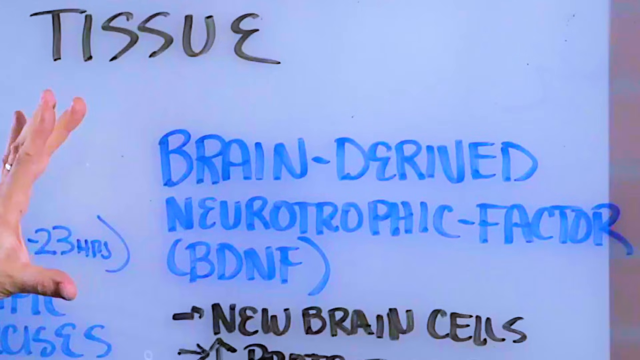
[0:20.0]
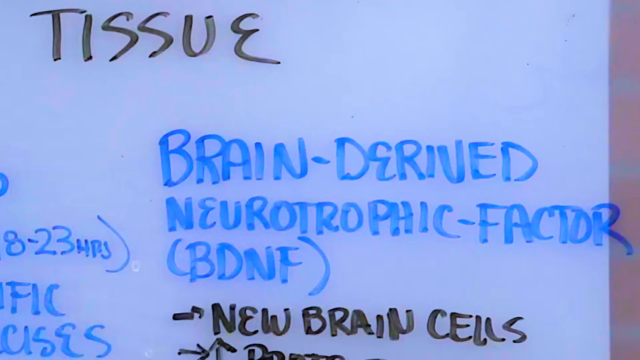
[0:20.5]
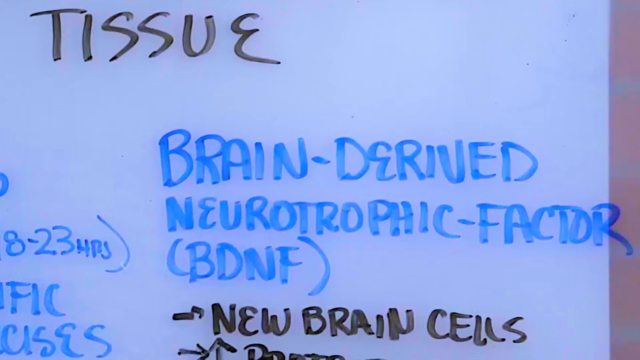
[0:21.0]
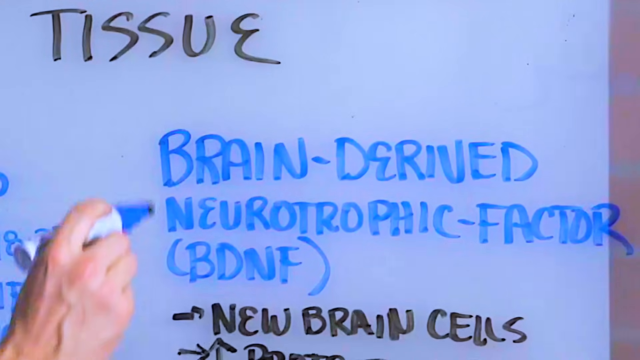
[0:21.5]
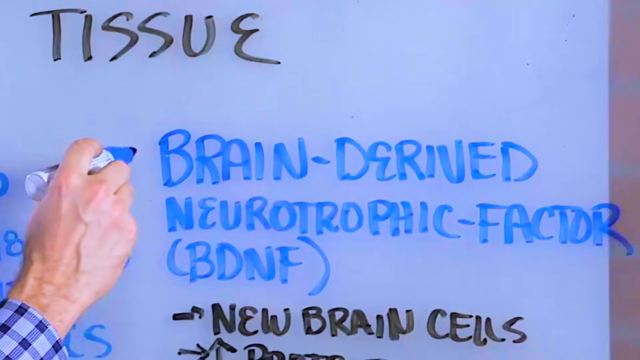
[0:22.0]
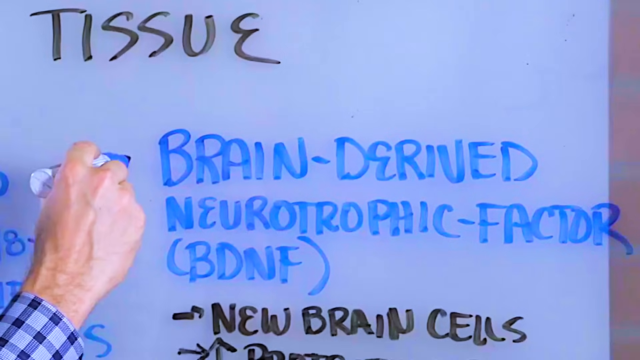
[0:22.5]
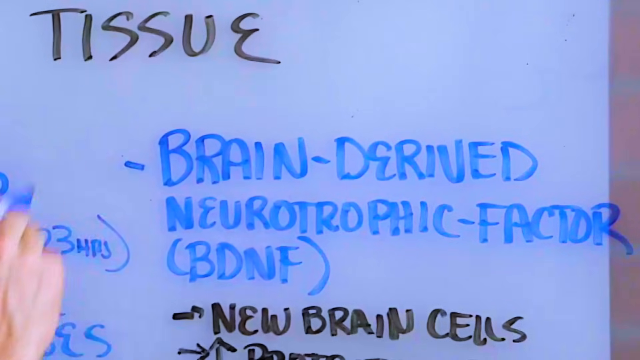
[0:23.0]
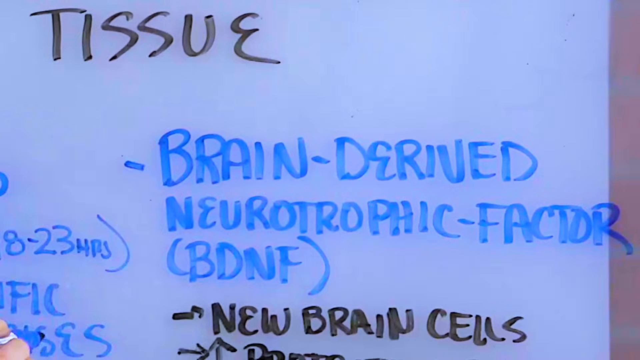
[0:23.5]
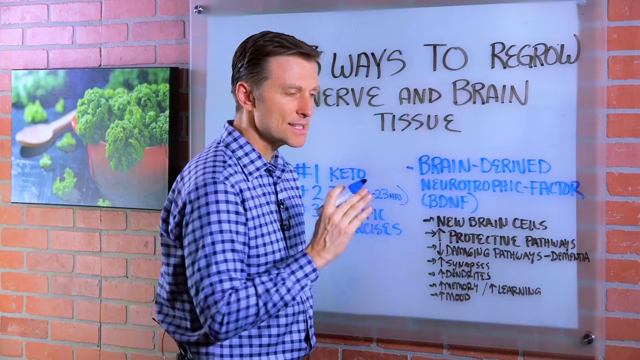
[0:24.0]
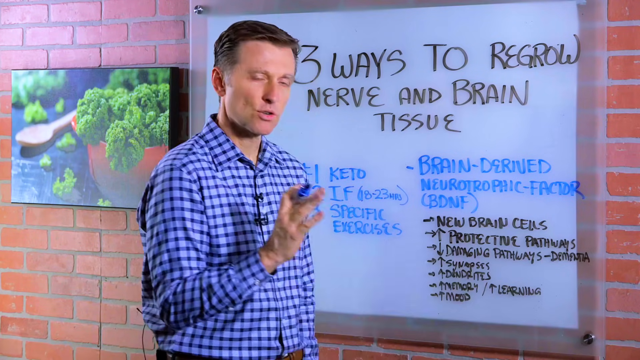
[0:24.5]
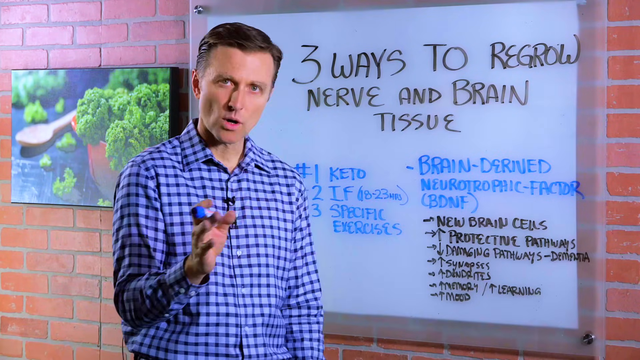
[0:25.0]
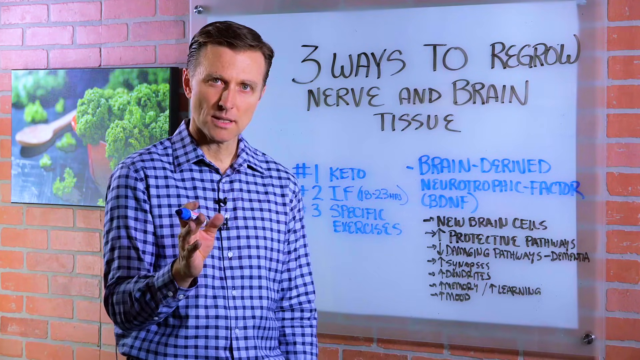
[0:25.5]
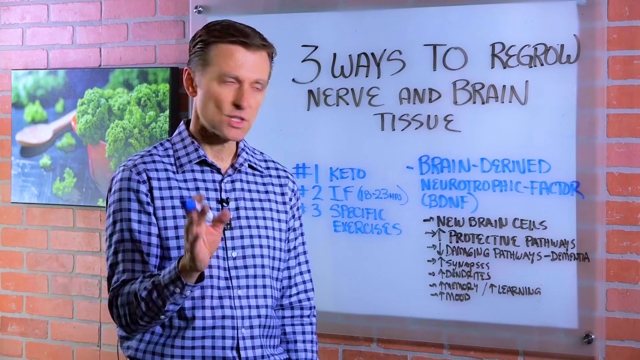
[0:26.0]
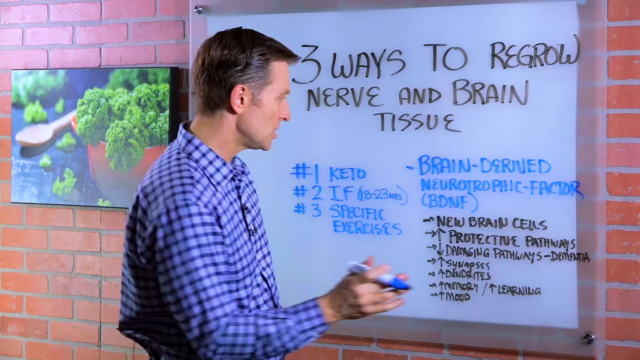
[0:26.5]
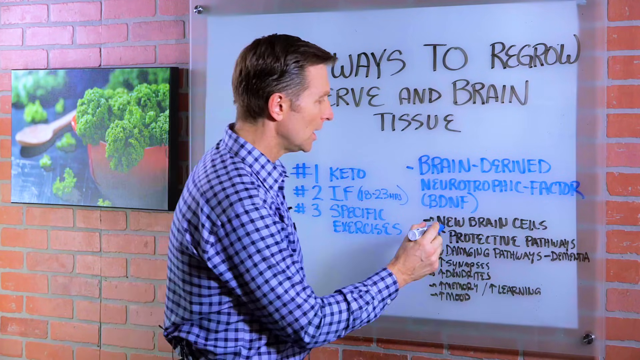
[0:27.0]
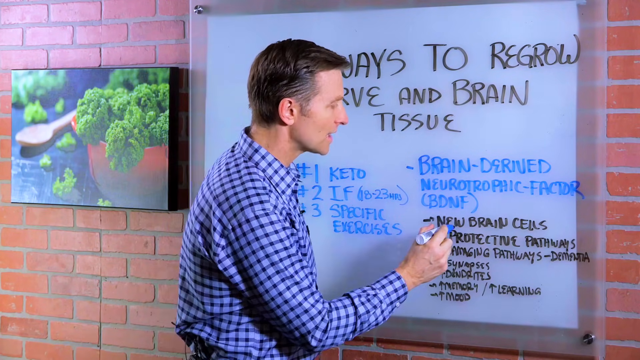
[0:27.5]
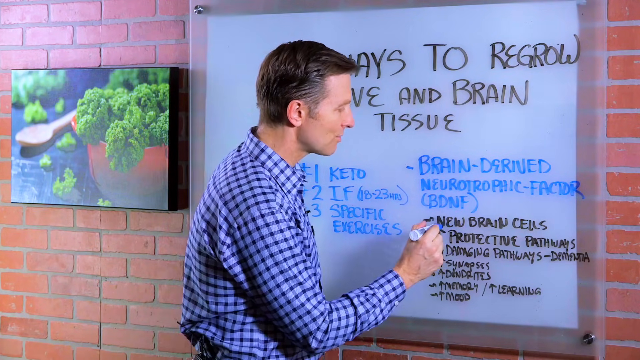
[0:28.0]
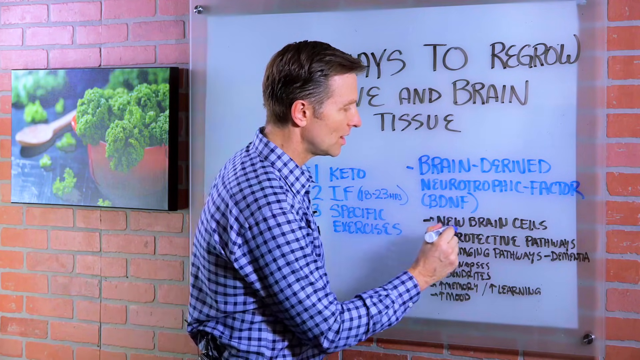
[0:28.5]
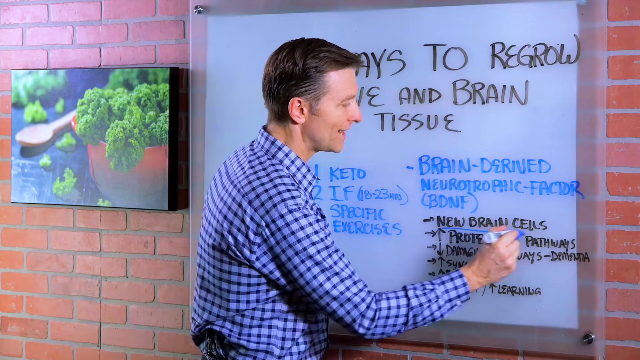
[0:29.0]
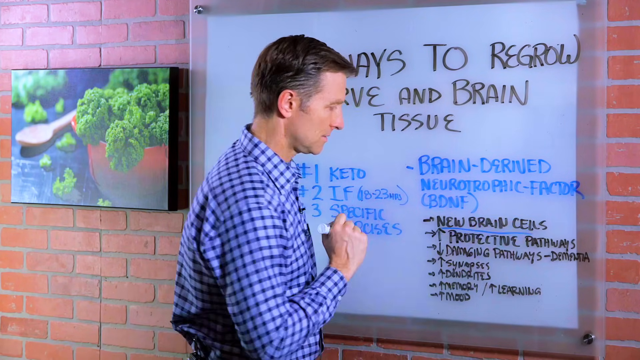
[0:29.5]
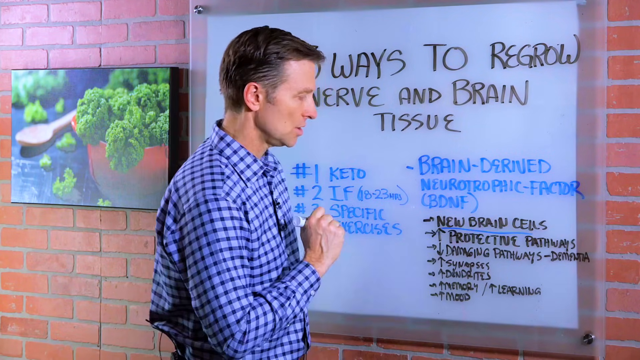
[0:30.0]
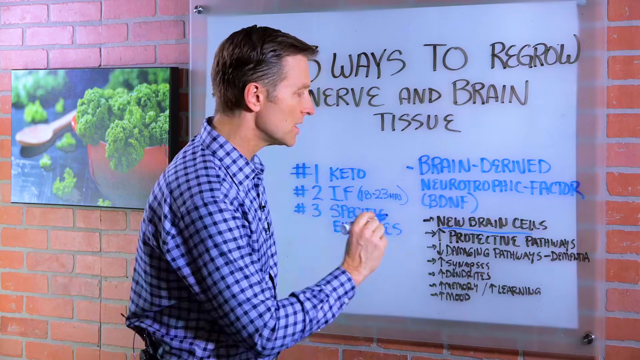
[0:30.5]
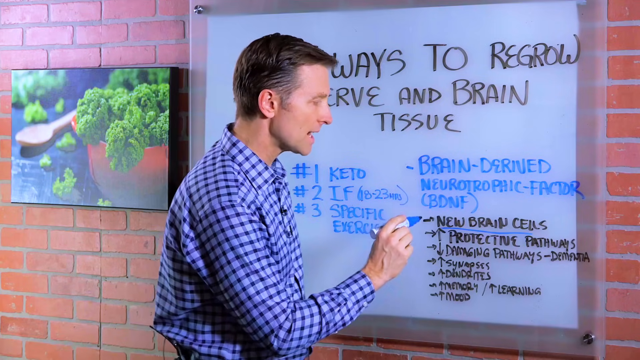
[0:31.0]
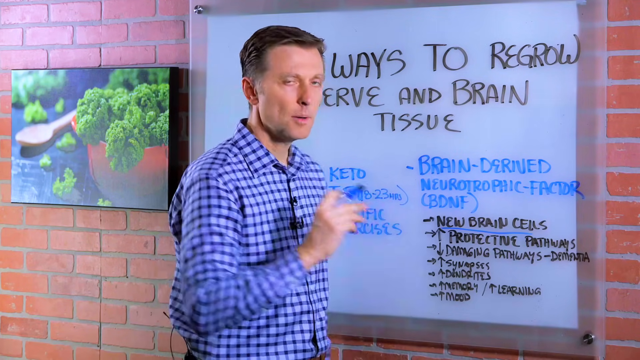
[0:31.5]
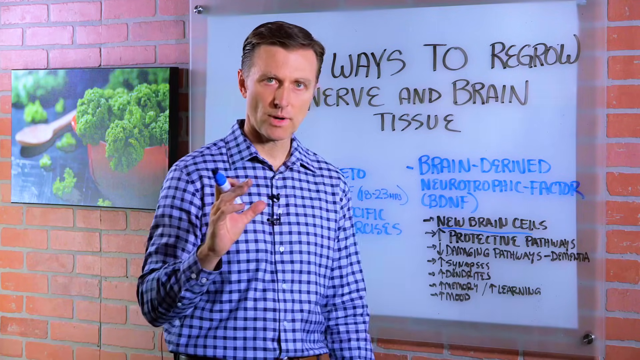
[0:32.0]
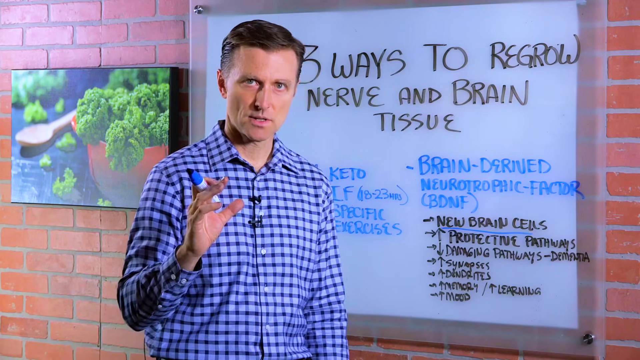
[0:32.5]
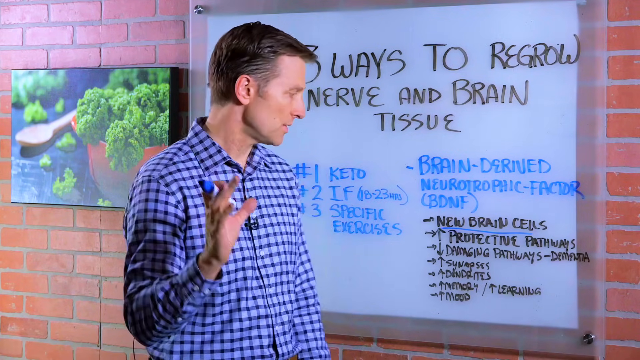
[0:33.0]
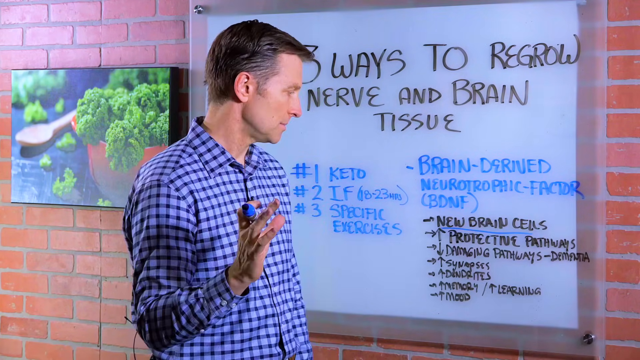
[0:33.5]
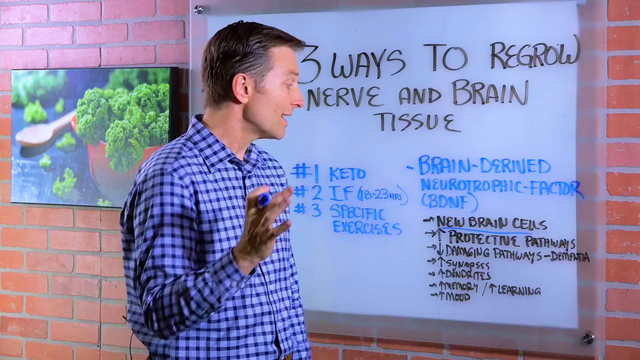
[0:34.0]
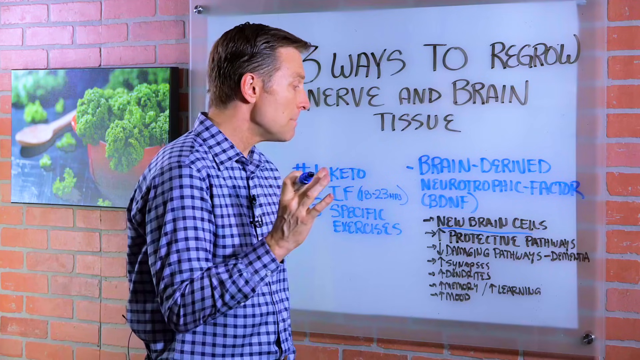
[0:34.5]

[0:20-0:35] A man holding a blue marker writes on a whiteboard, appears to talk to the camera, and then returns to the whiteboard to underline one of the things he has written, "new brain cells." He kind of checks off one of the items, then keeps talking as he underlines "new brain cells" with the blue marker. The whiteboard reads "three ways to regrow nerve and brain tissue" and "brain-derived neurotrophic factor," mostly written in blue and black marker. The whiteboard is attached to a brick-looking wall, and to the left of it is a picture of what looks like broccoli in a bowl, seemingly a portrait of a leafy green vegetable or broccoli.